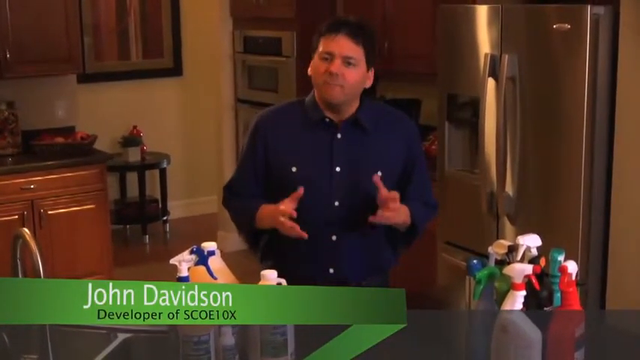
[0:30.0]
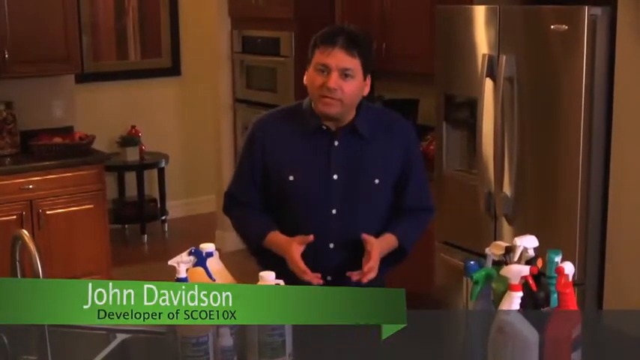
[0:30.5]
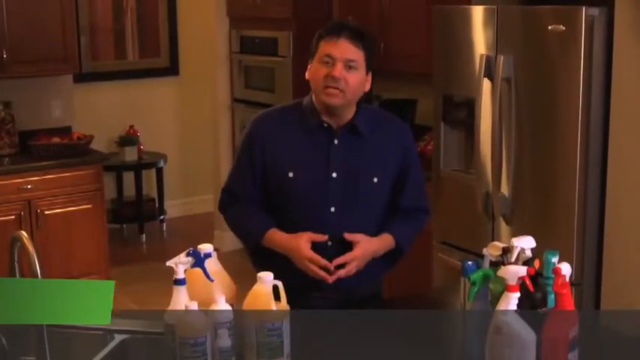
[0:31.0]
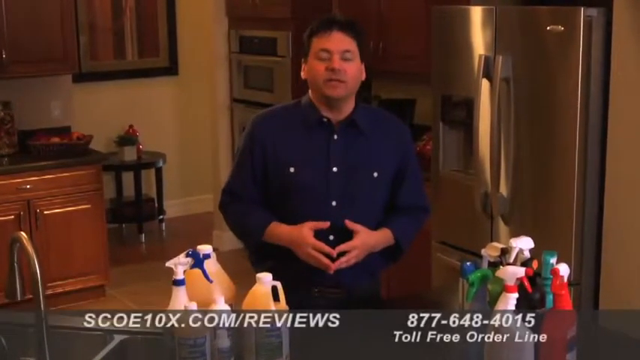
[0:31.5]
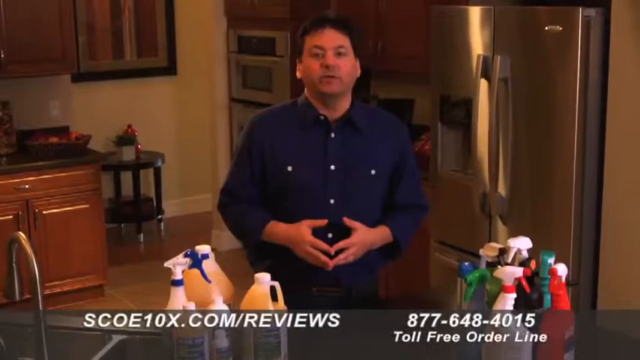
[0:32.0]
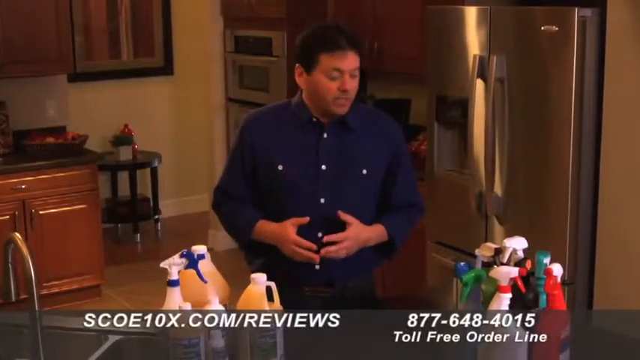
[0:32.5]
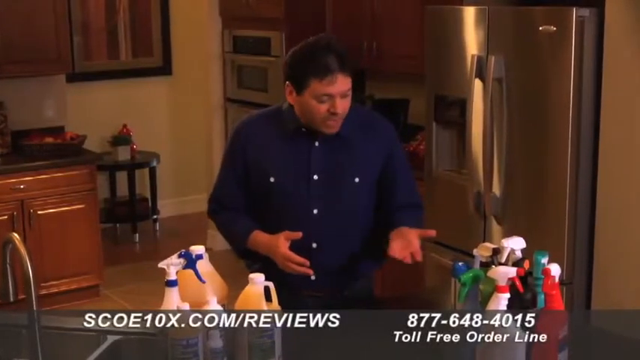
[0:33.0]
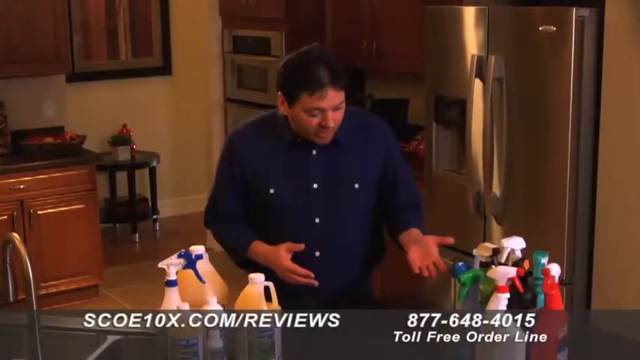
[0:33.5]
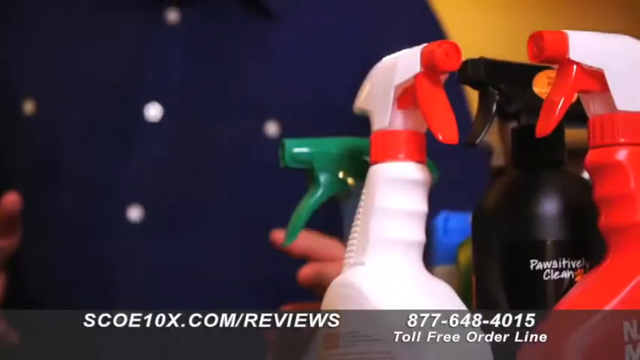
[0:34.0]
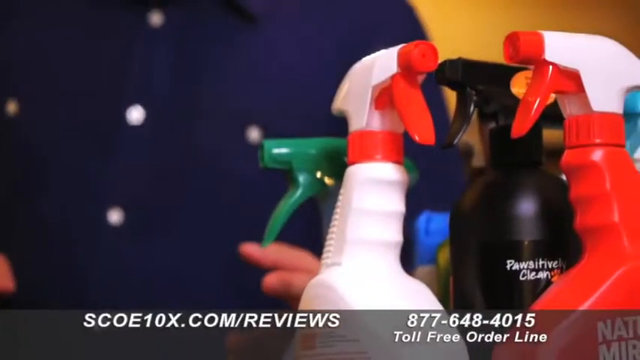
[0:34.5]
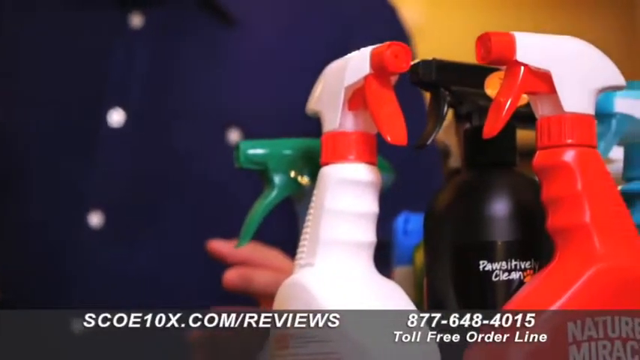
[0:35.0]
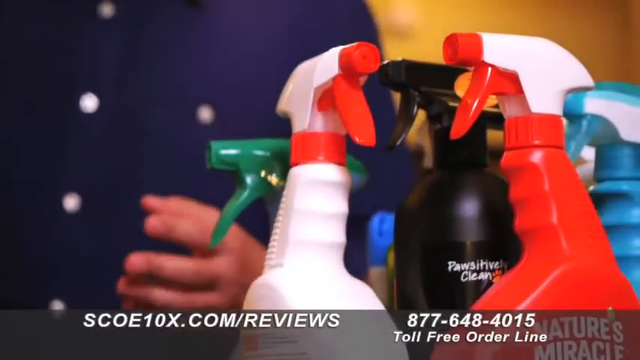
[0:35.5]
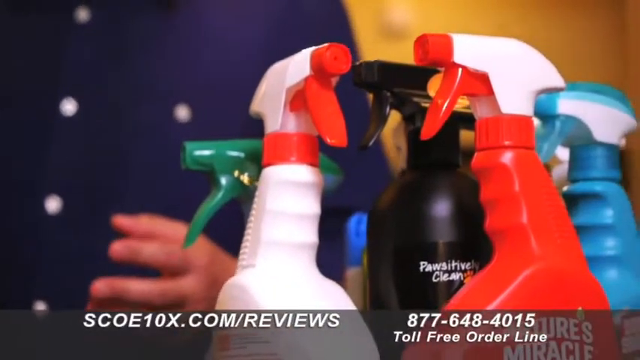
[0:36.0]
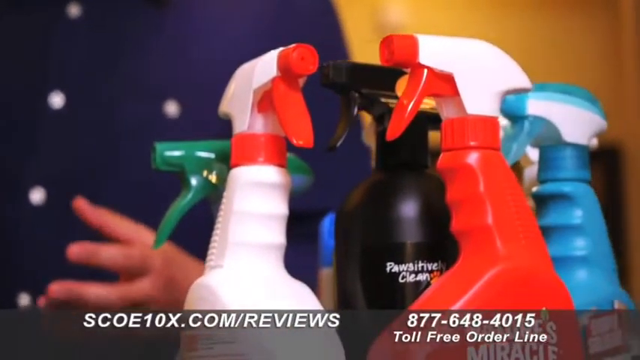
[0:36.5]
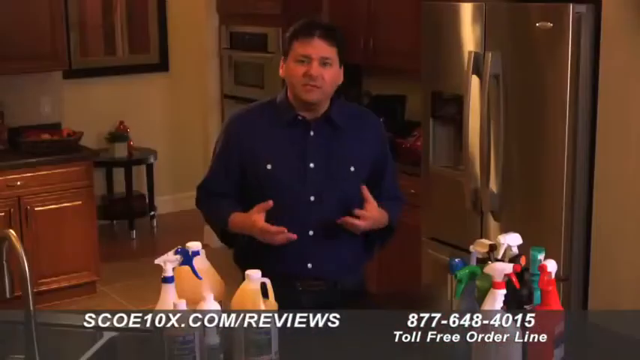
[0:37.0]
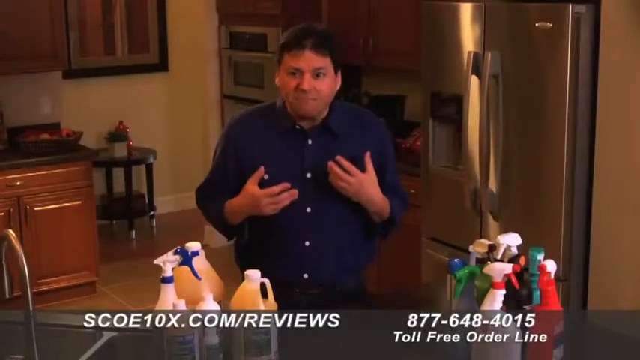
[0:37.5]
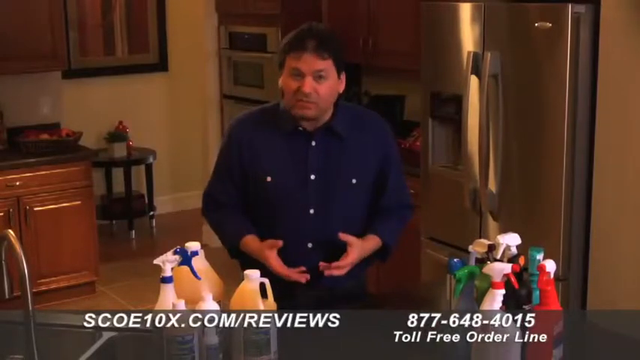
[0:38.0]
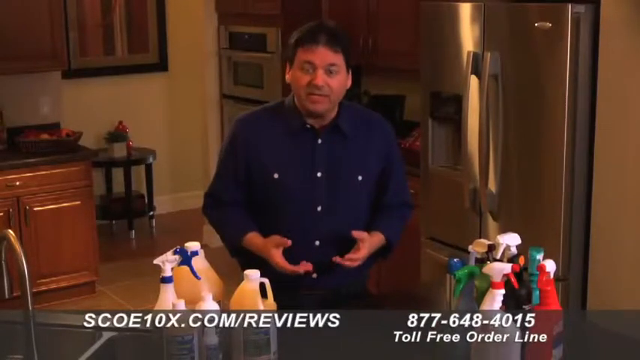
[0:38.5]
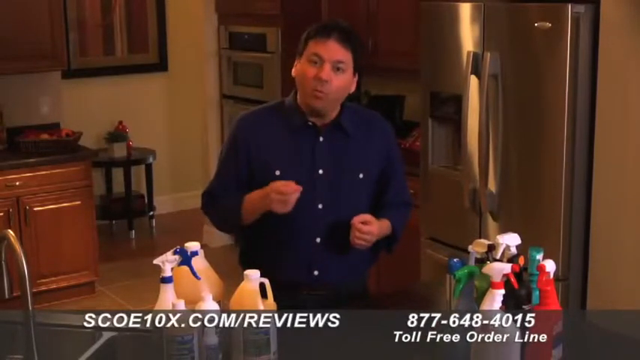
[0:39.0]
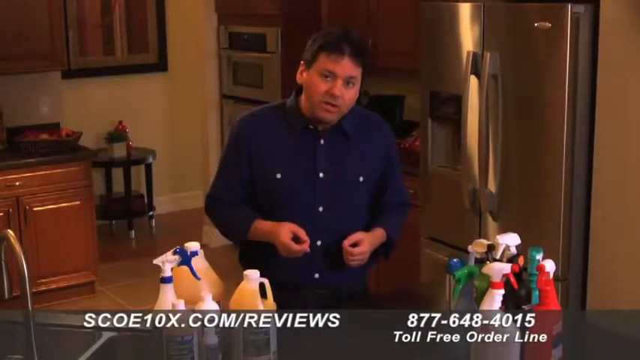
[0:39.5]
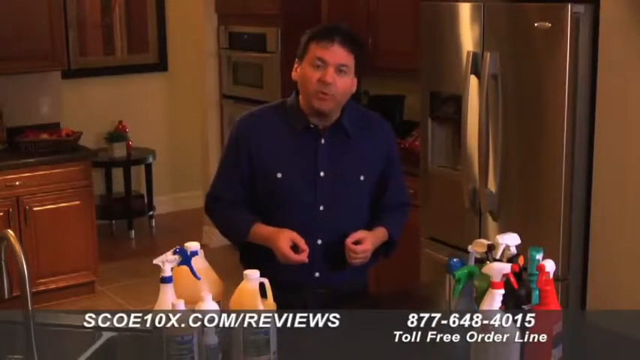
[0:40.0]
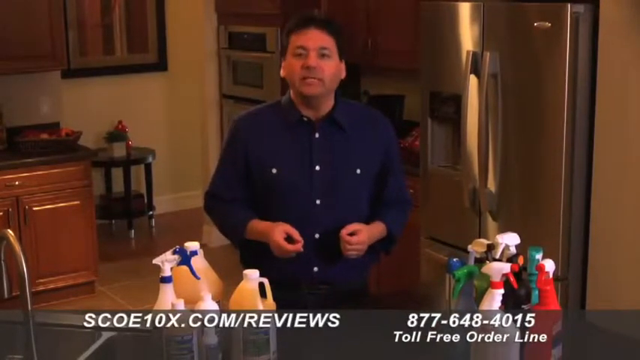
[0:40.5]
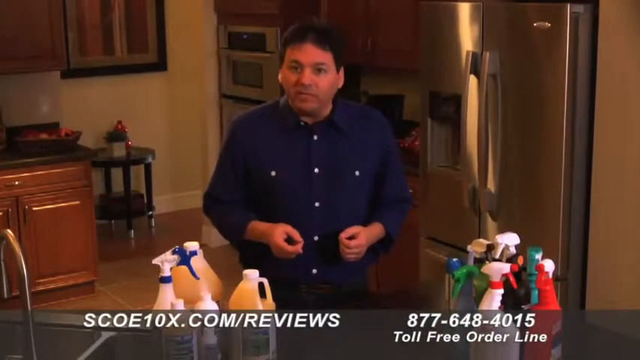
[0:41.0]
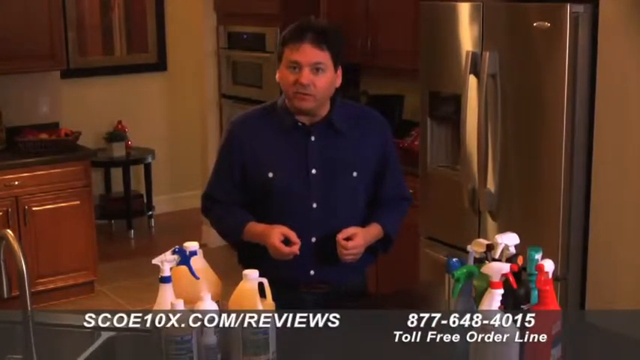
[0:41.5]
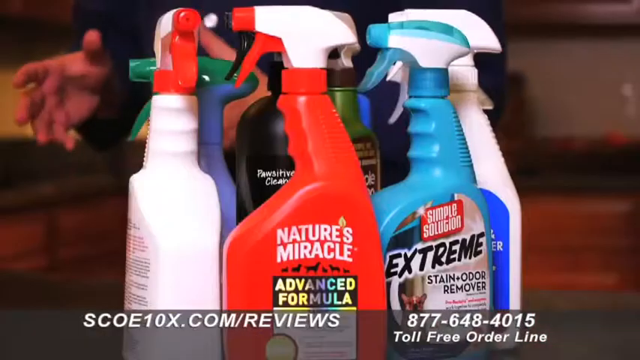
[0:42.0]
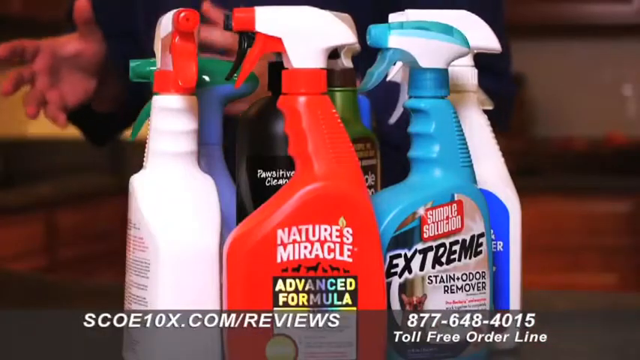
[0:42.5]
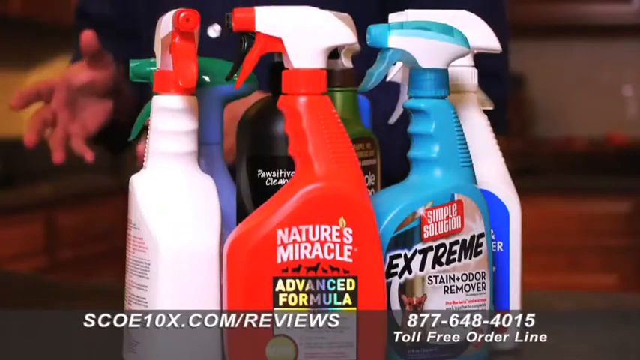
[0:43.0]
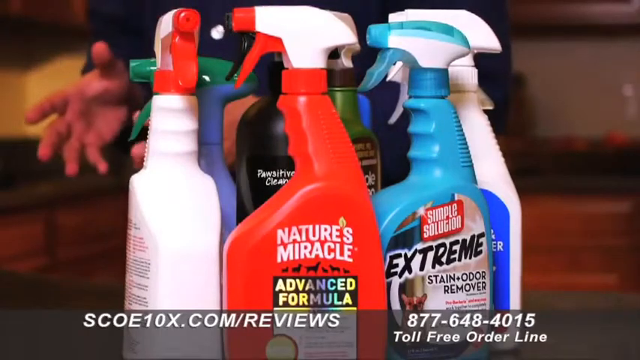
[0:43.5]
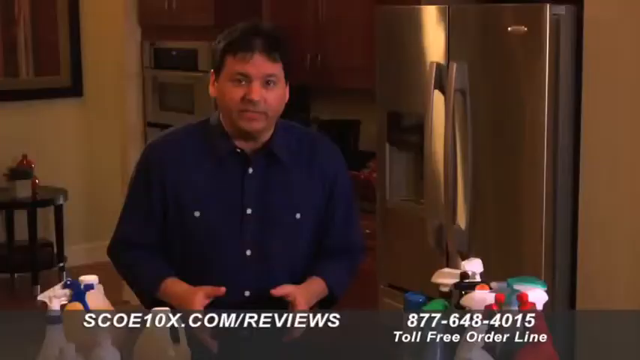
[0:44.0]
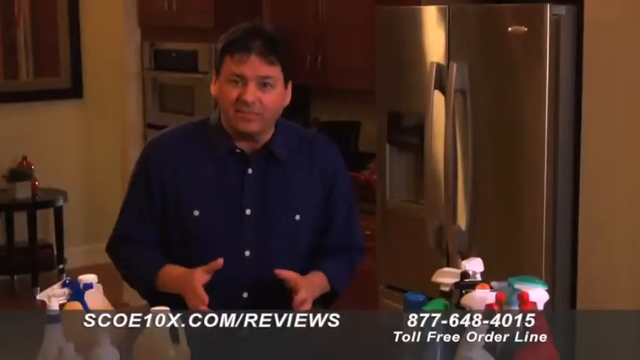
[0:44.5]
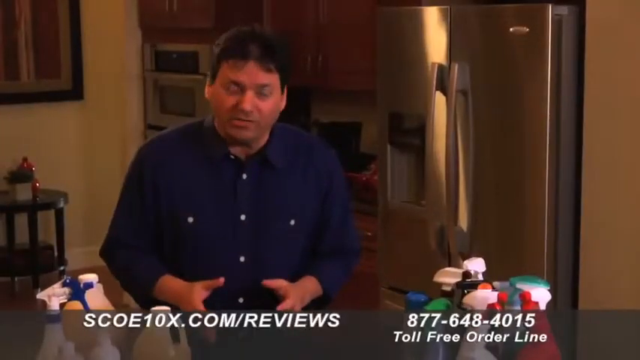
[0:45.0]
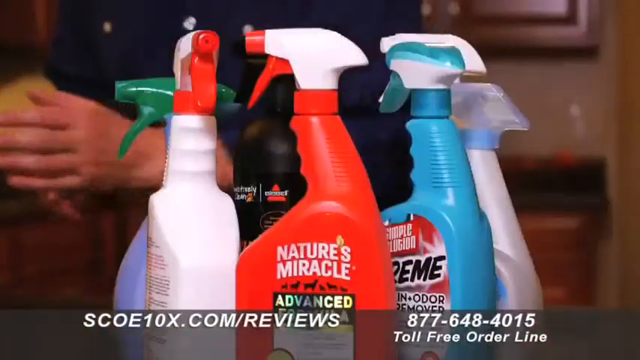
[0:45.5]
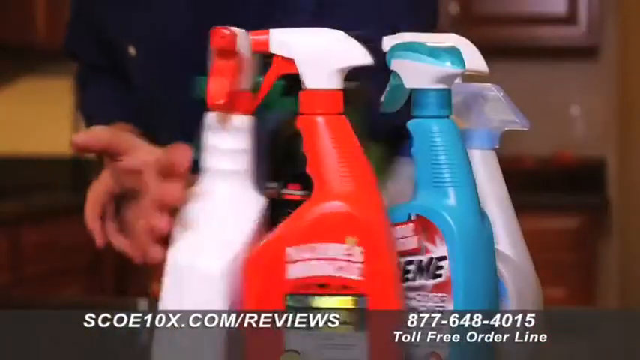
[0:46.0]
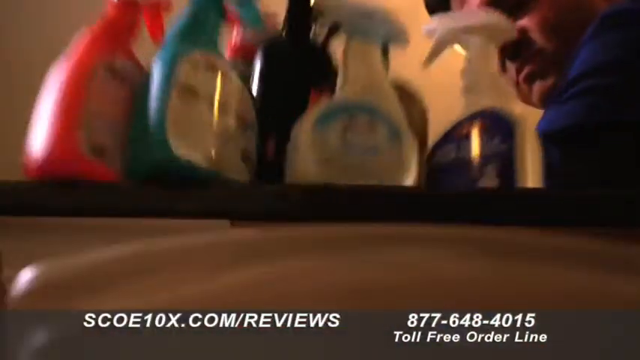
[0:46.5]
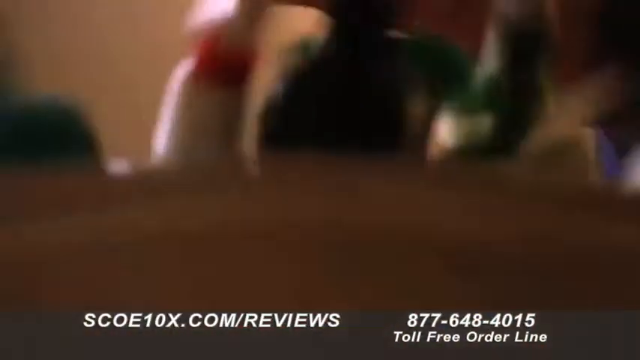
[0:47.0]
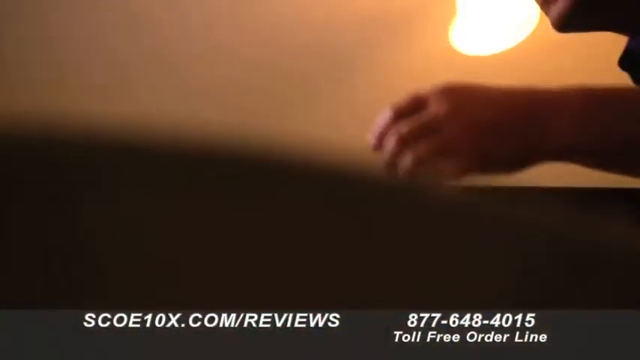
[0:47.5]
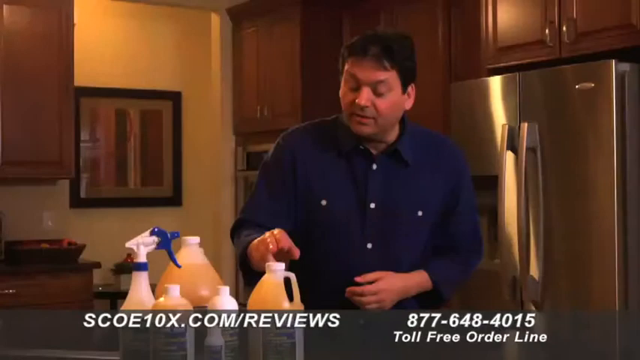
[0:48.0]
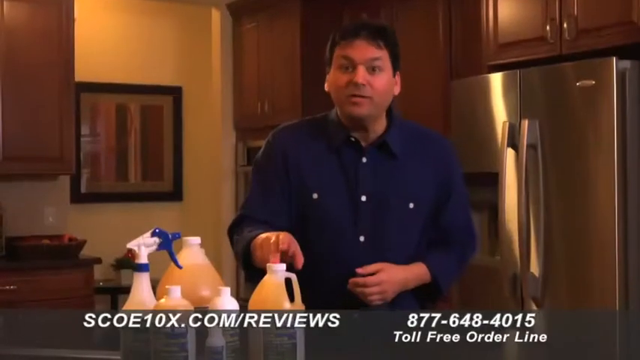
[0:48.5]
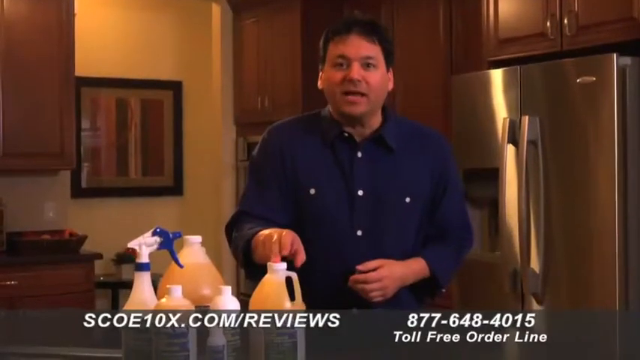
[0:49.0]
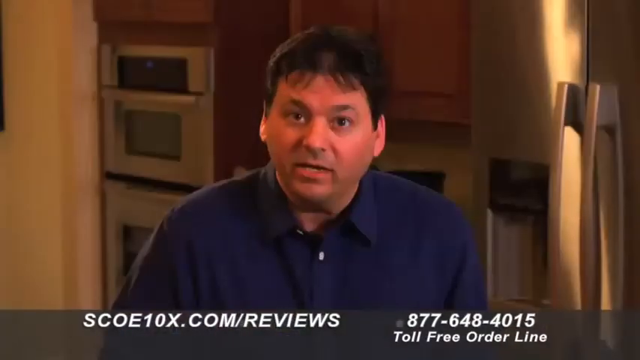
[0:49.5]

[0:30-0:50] A man is standing in what looks like a kitchen, to the left side of a stainless steel refrigerator. In front of him seems to be a counter holding a lot of spray bottles of various colors. In the bottom left, a green banner says "John Davidson, developer of Sko 10x." He seems to be intently explaining, most likely, his product. He points his hands toward the camera, moving them up and down as if placing emphasis on what he is saying. He then kind of brings his fingertips together in front of his belly area. With his left hand, on the viewer's right, he kind of shows the group of bottles on the right side of the counter. The camera zooms in on the bottles; there seem to be quite a few: one white, one red, one blue, one black, and one green. The camera kind of pans toward the right, showing off the bottles, then kind of zooms out to show the man again speaking intently with his hands toward the camera, seemingly explaining an issue.